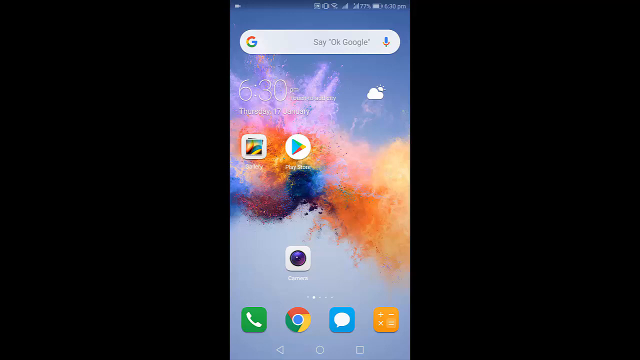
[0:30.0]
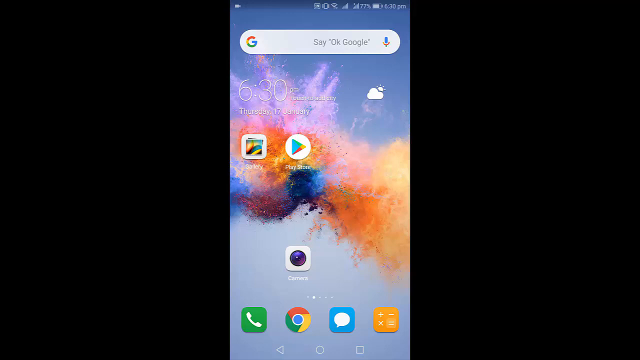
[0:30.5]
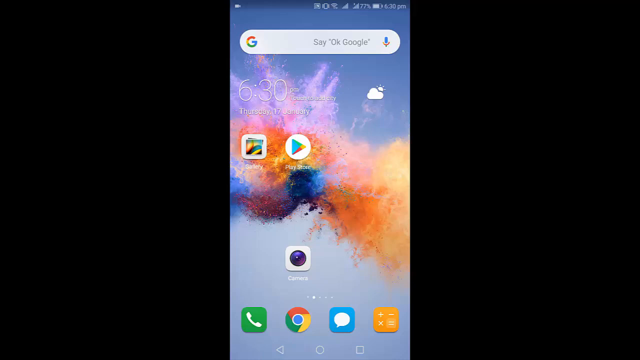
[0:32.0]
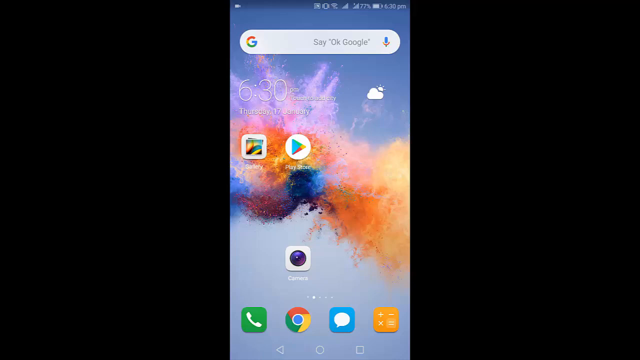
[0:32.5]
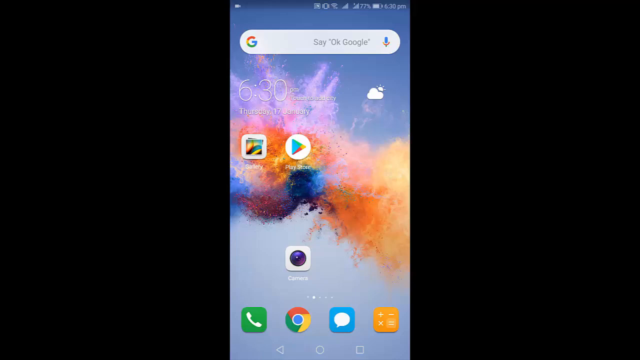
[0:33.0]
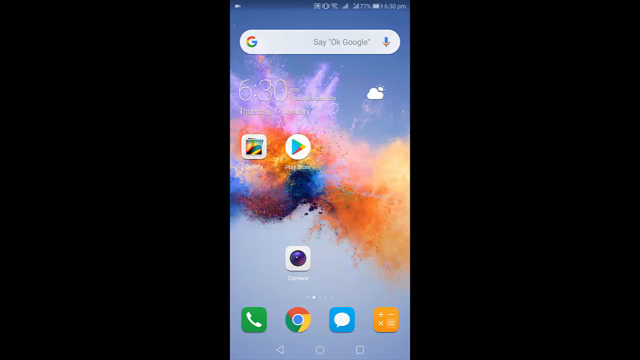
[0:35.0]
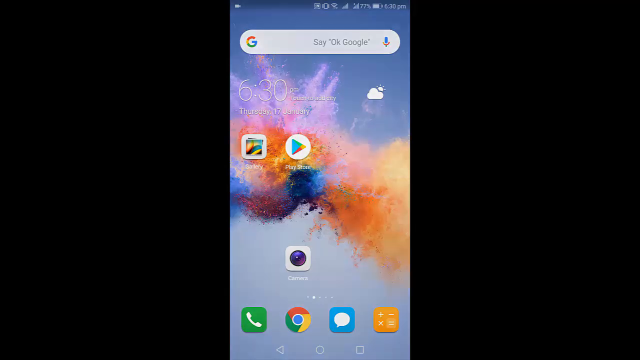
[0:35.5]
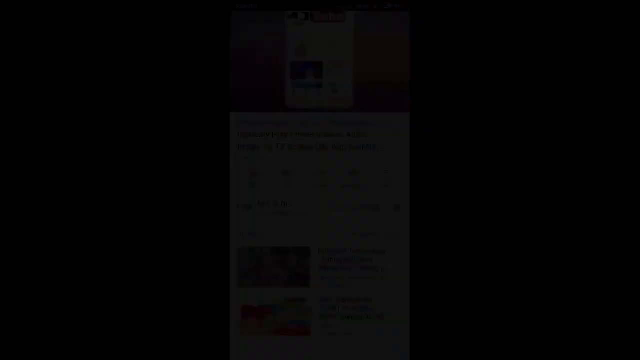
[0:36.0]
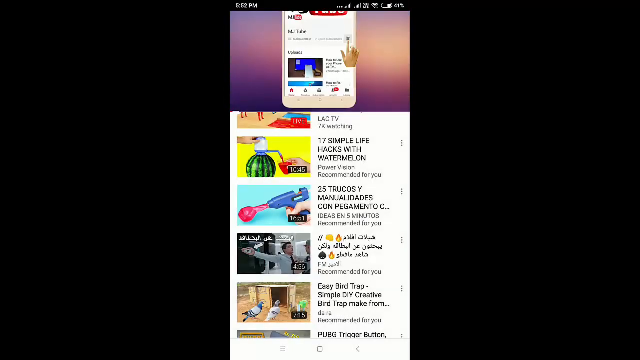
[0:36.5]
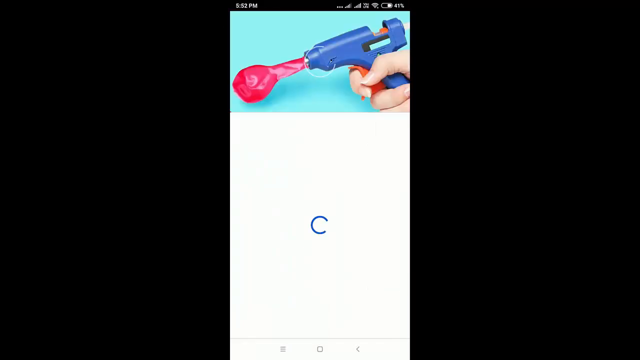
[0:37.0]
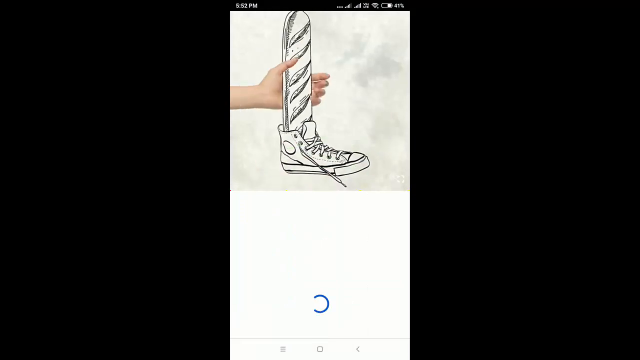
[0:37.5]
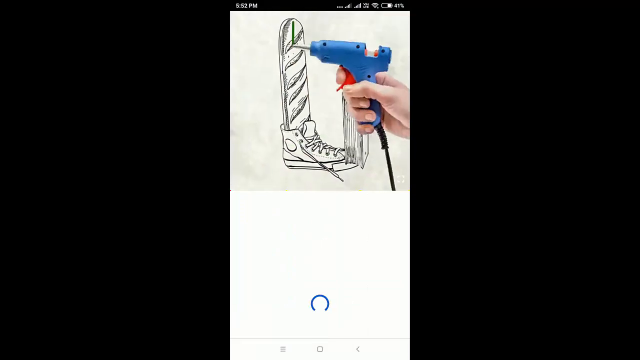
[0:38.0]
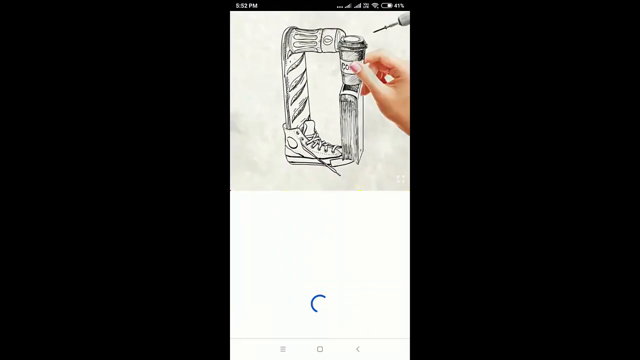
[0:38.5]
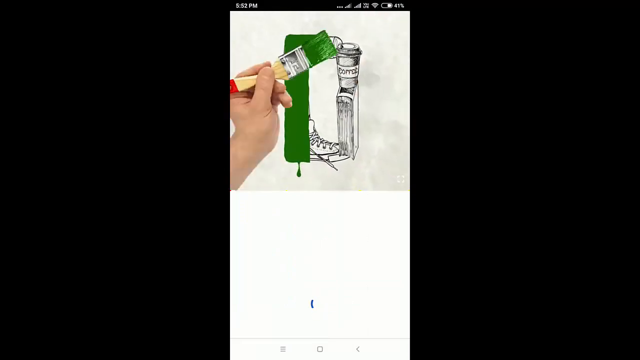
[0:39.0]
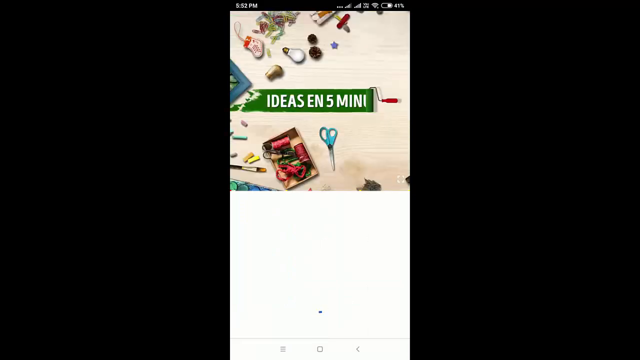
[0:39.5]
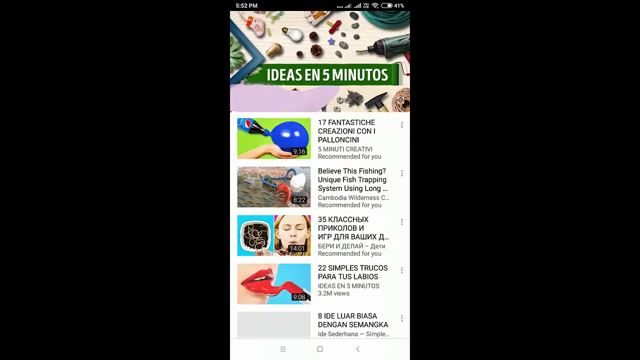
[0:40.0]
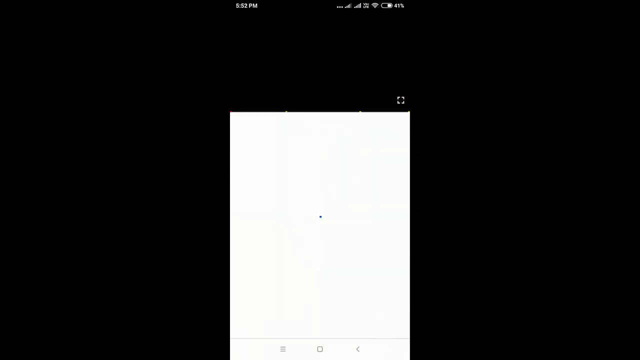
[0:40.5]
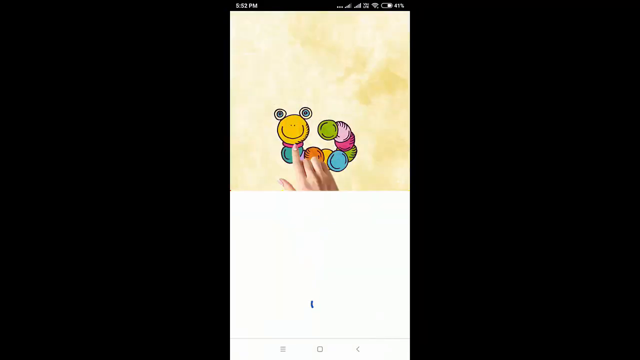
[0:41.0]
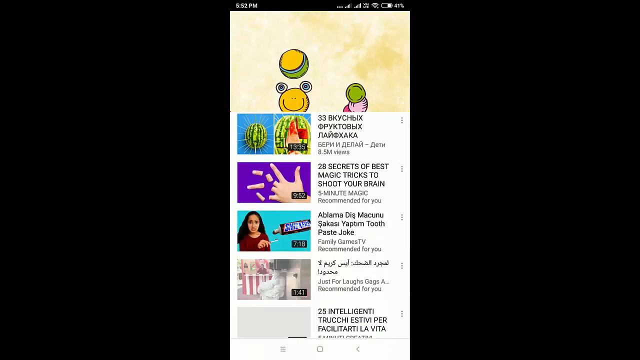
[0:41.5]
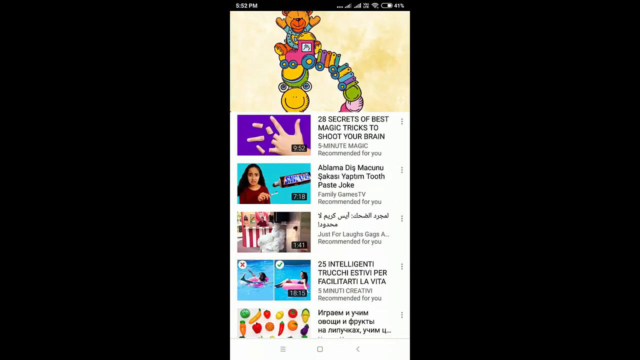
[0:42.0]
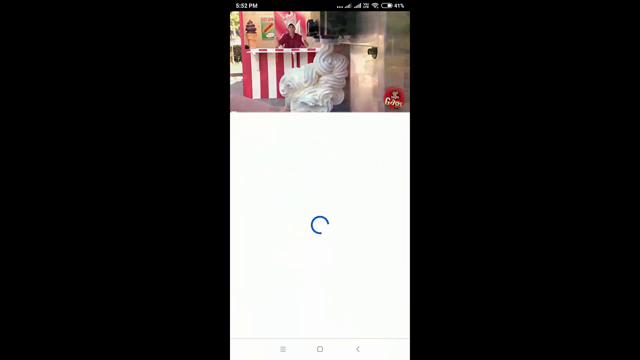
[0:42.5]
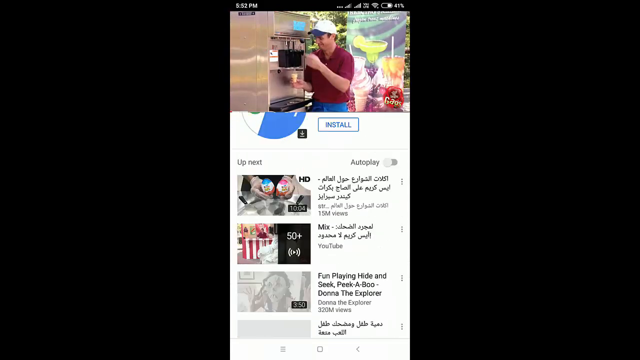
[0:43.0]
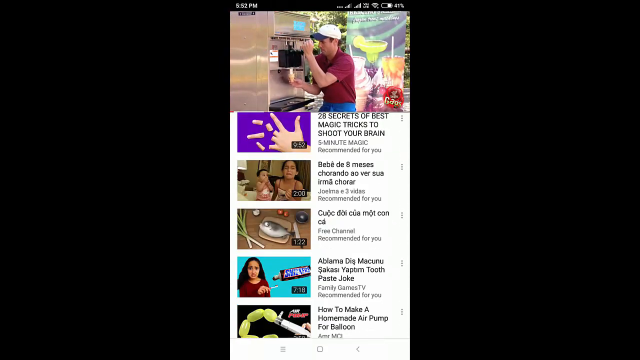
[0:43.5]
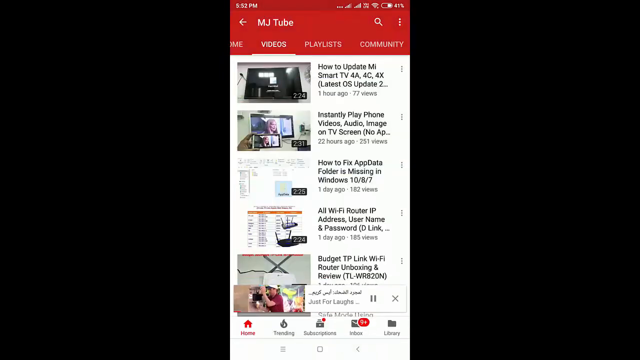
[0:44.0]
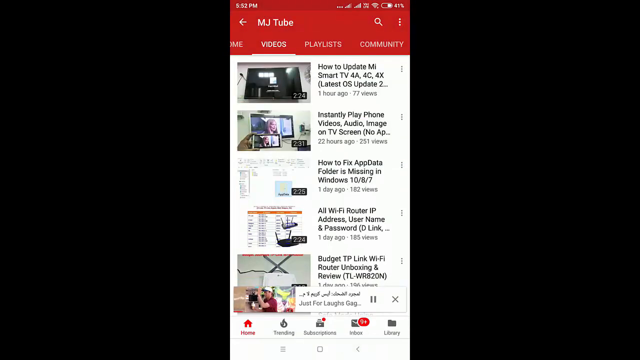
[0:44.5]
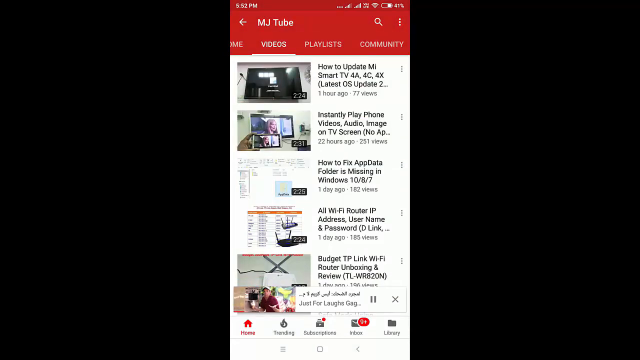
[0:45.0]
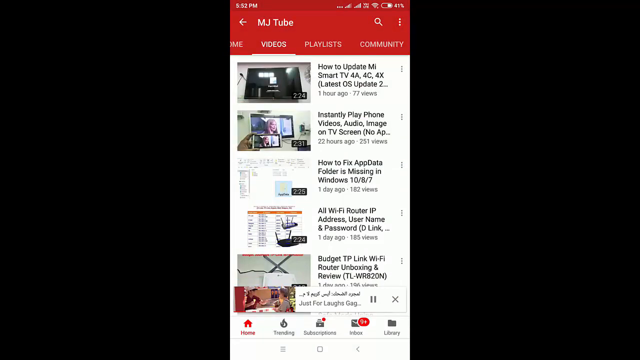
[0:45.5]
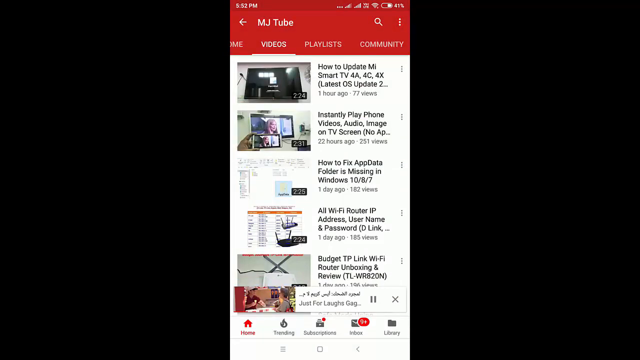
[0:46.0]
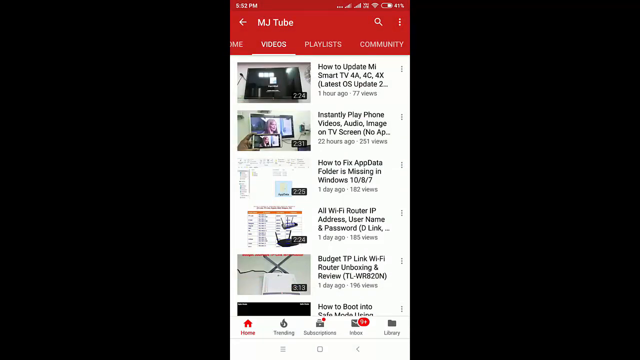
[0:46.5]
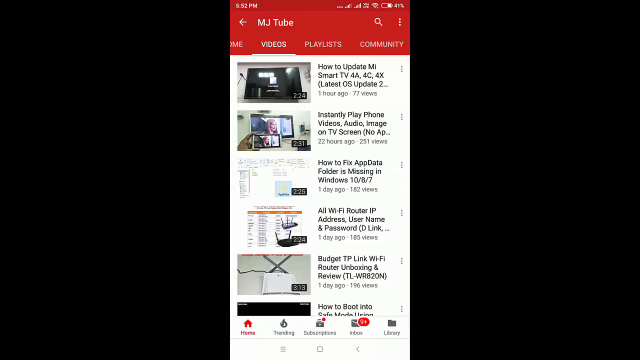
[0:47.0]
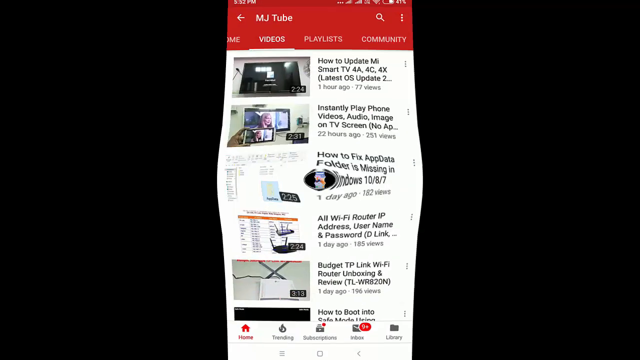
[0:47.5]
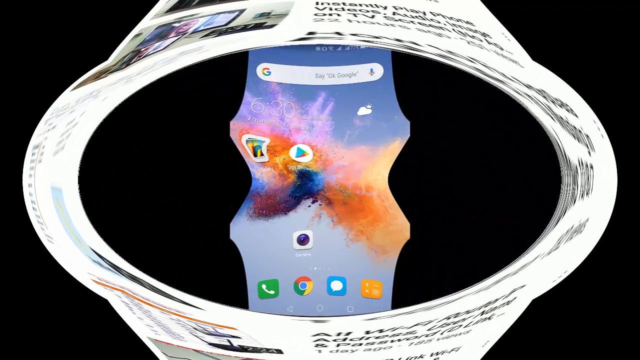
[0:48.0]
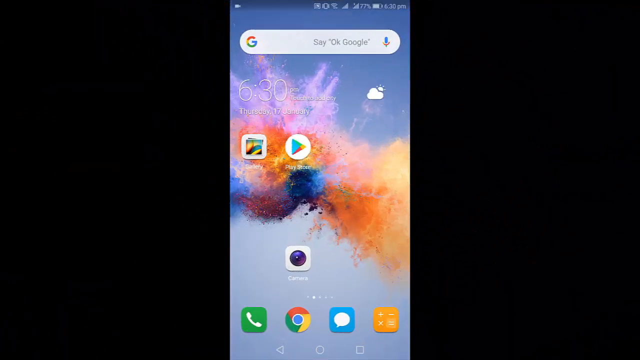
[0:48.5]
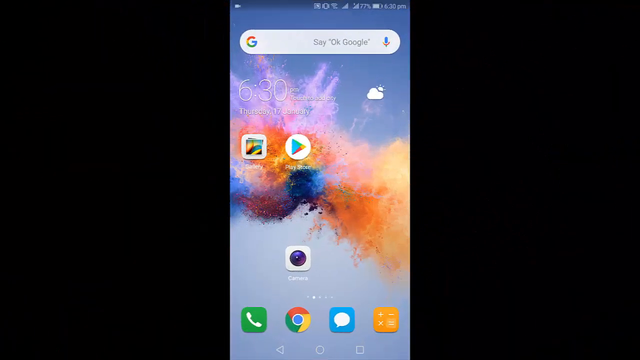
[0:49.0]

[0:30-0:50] The phone home screen stays unchanged for a while, then the YouTube app appears with a number of different videos. The first screen has a YouTube preview at the top and a list of different YouTube channels below. The preview plays a quick video of what looks like a balloon gun, then switches to a video of some art: a shoe with bread in it, a book right in front of the shoe, and some black and white. The balloon gun is somehow used to glue a bottle to the top of the bread, and a number of other things are glued on; a coffee cup is put on top of the book, and a big green "d" is painted. The view zooms out, with the words "ideas" and "five minute". It returns to the original YouTube screen listing videos with a preview at the top. The preview switches to a different video with language that looks like Russian, showing something like a worm made of buttons, then a train on top. Next is a video of what looks like an outdoor stand, maybe selling candy, hot dogs or ice cream. Then comes a video with apparently Middle Eastern writing, where a man in front of an ice cream machine gets ice cream in a cone. Finally it switches to the MJ Tube channel, all still within YouTube.